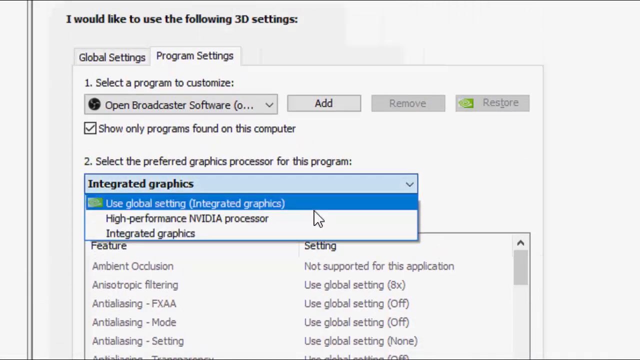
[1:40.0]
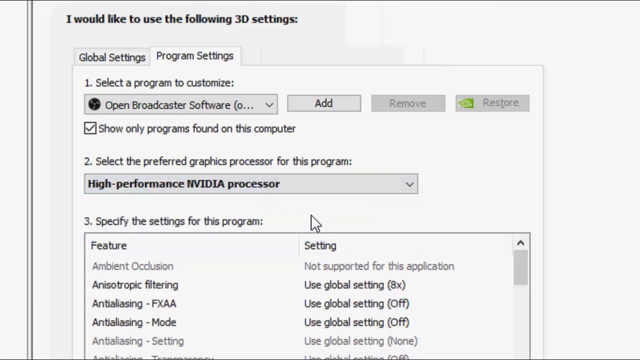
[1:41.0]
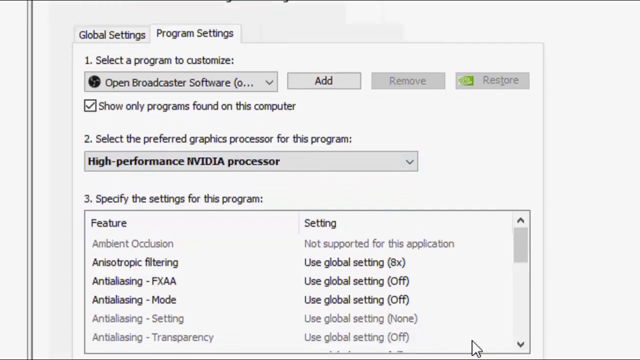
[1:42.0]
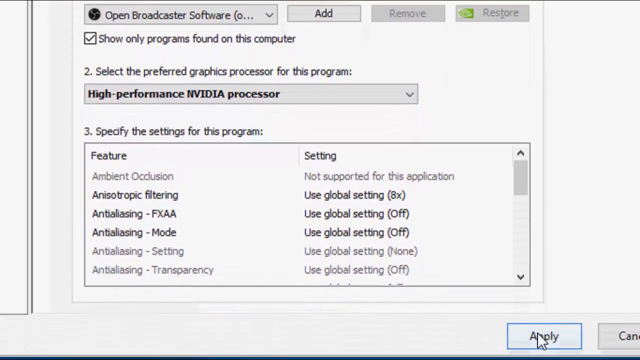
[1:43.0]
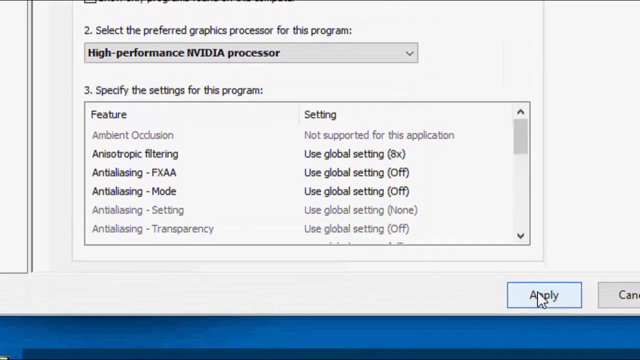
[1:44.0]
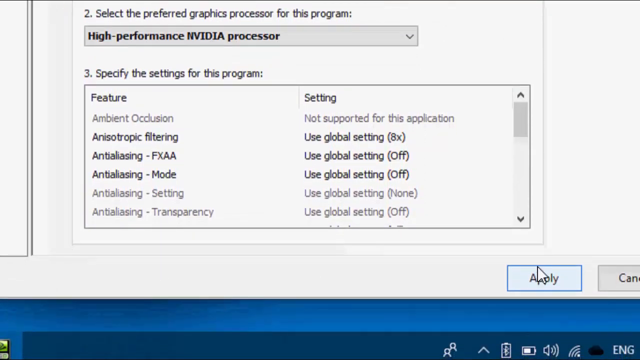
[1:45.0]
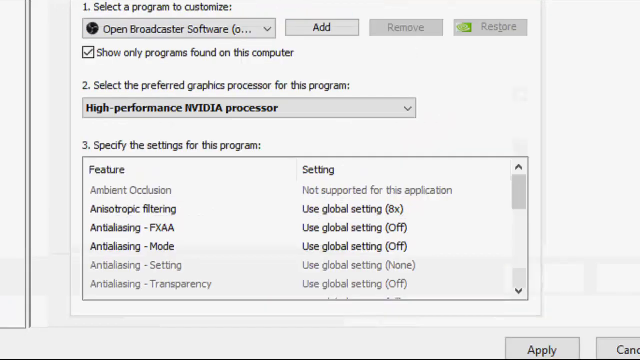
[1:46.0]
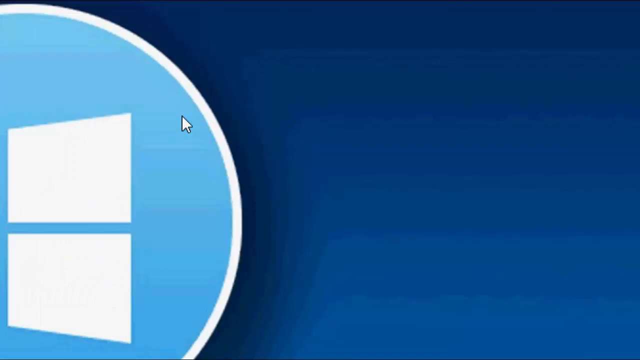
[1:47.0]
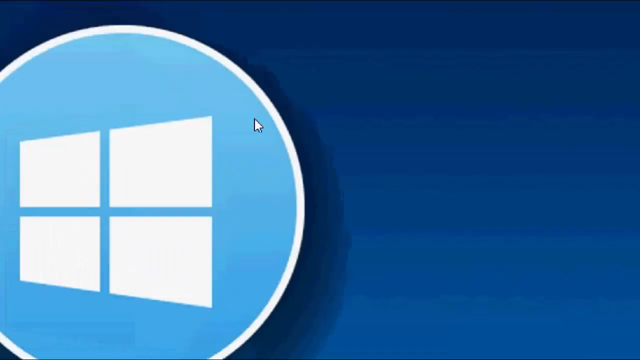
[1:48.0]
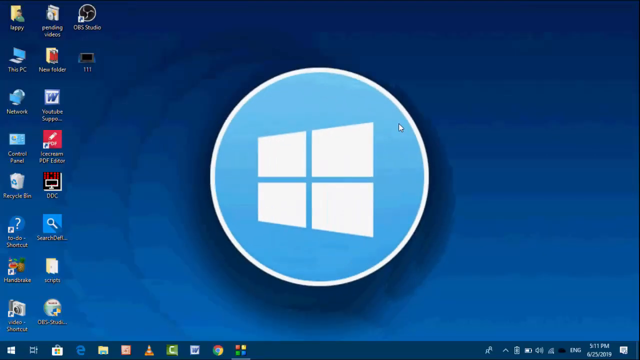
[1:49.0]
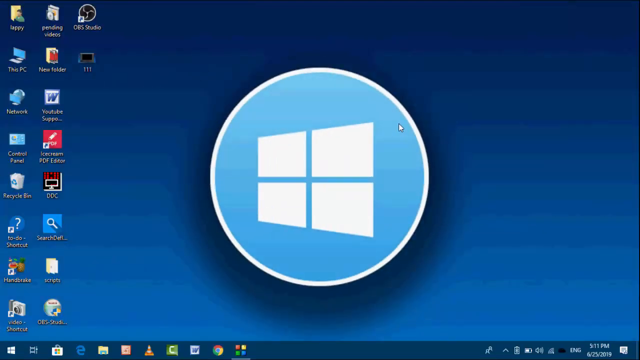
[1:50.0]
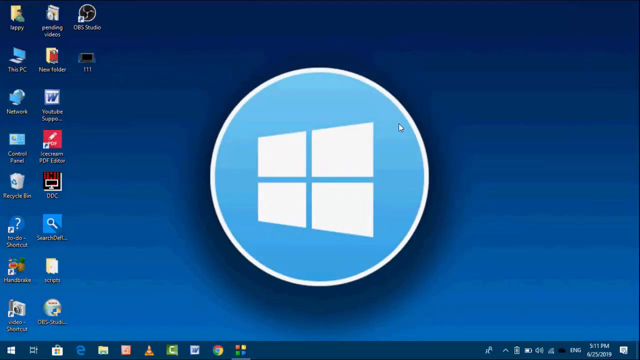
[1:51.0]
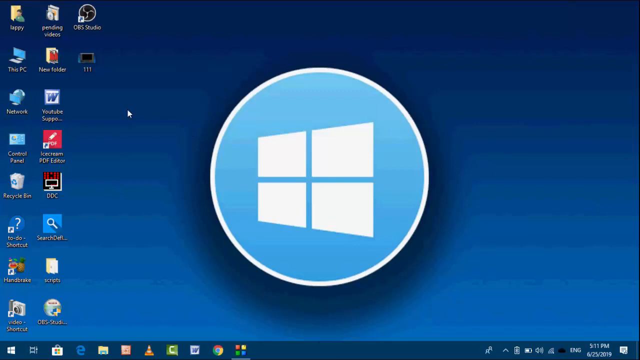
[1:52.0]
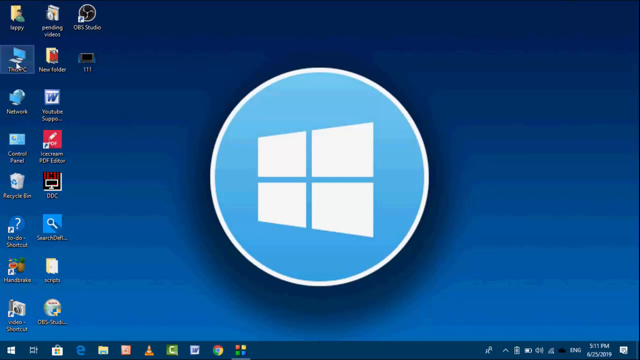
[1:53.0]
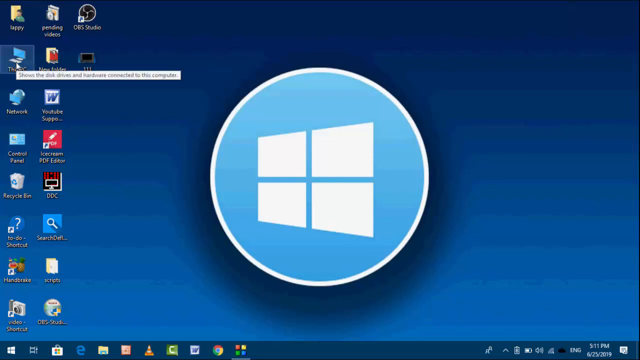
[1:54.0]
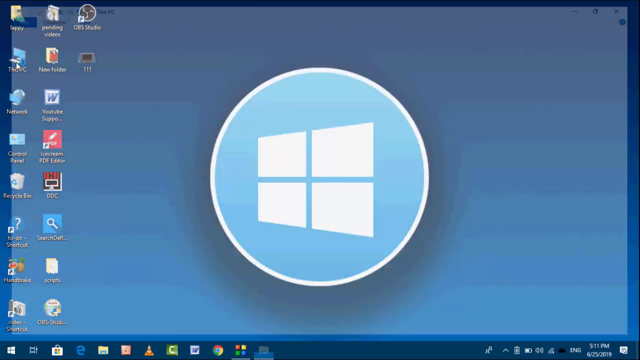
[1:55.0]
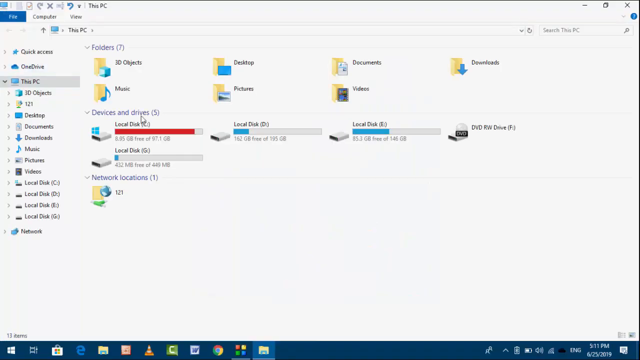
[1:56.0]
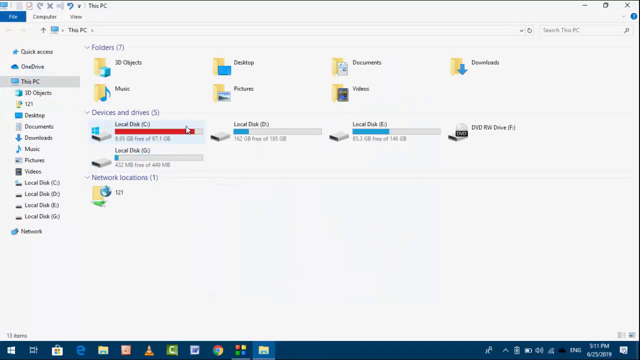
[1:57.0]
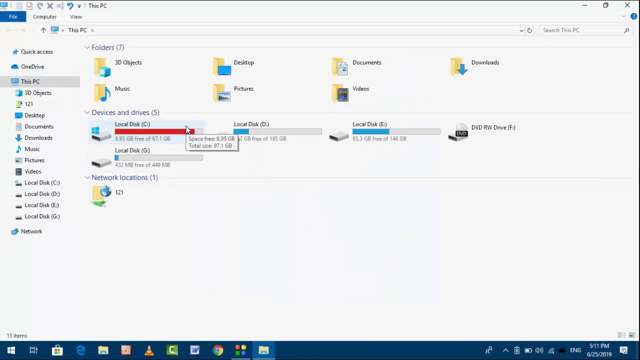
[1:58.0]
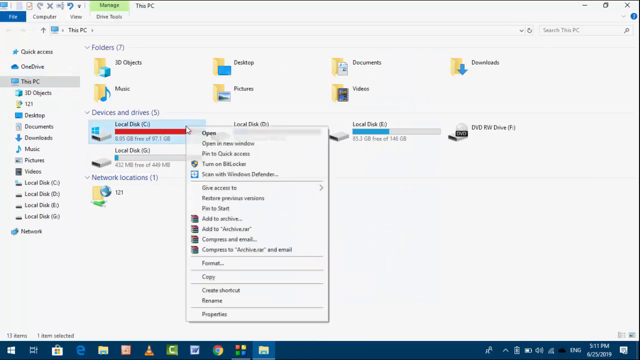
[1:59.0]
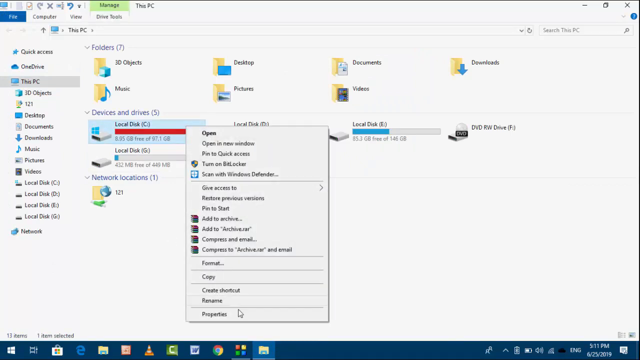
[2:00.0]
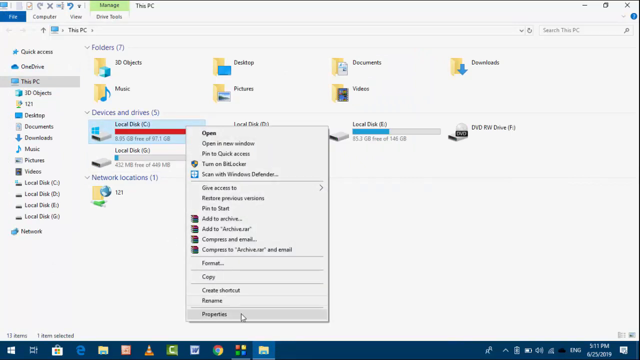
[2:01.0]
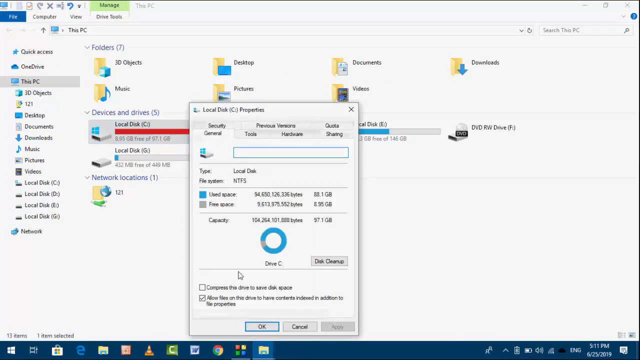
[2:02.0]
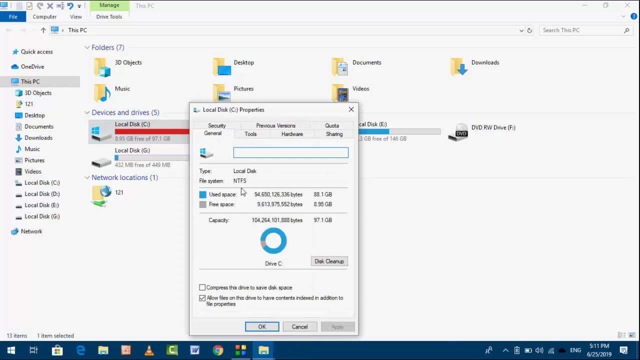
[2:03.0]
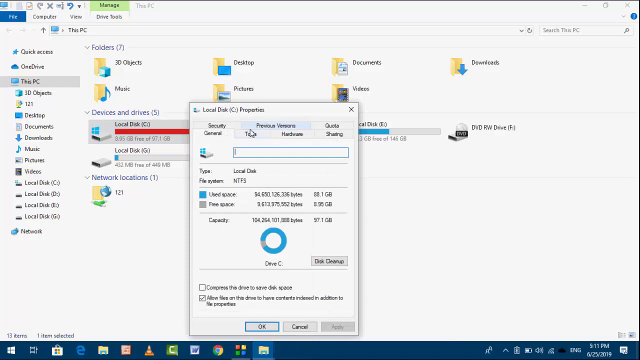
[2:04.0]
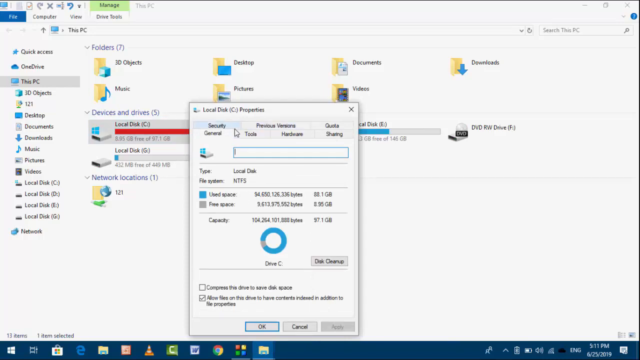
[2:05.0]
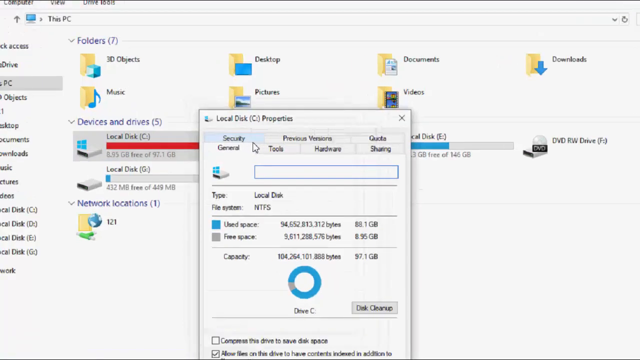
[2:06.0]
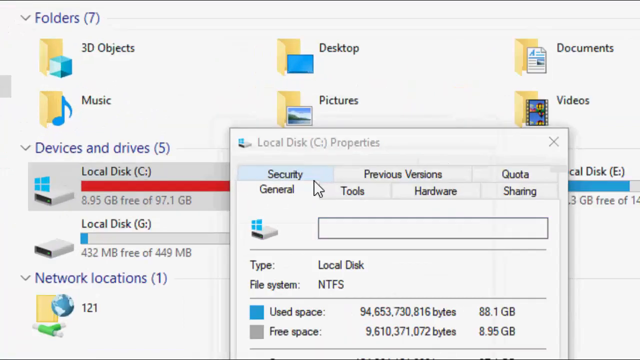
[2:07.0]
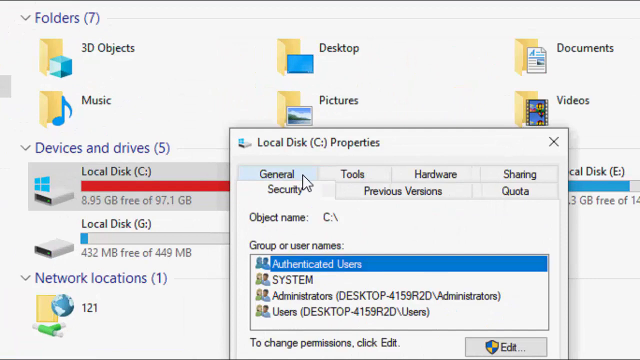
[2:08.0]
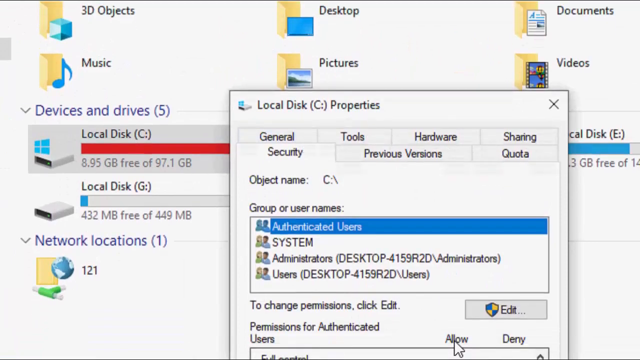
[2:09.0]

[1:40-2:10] Still on the 3D settings page of the NVIDIA application, the person goes to number two, "Select the preferred graphics processor for this program", opens the drop-down menu and selects High-performance NVIDIA processor. They scroll down to the settings for this program, which list "Ambient occlusion" under "Feature", an entry showing "Not supported for this application", and "Use global setting" eight times. They scroll to the bottom right and hover over the Apply button. The window then disappears and they are back on the Windows desktop, with the Windows symbol on a blue circle in the center. They open This PC and navigate to the local disk under devices and drives; the local disk looks nearly full, shown in red and almost using up all the storage.